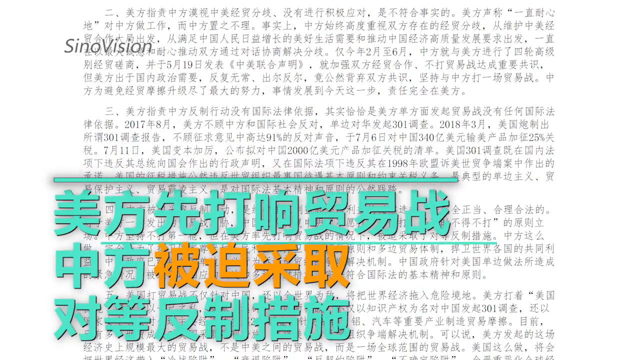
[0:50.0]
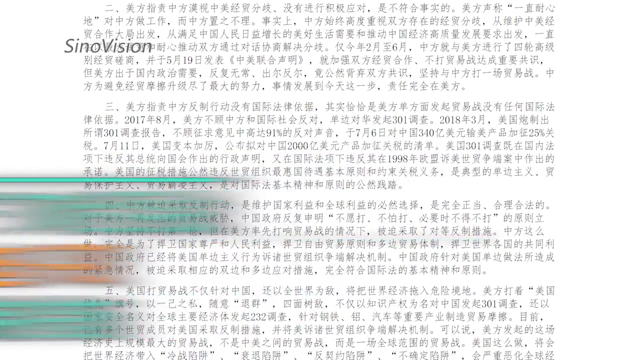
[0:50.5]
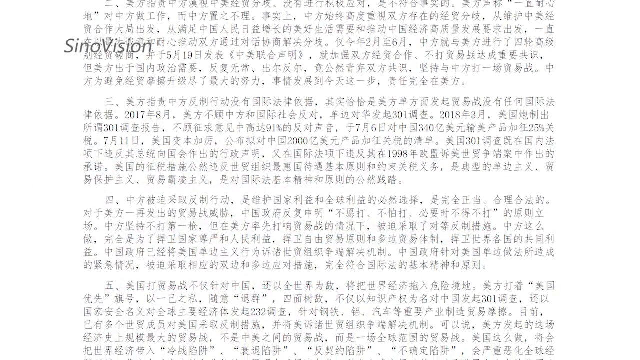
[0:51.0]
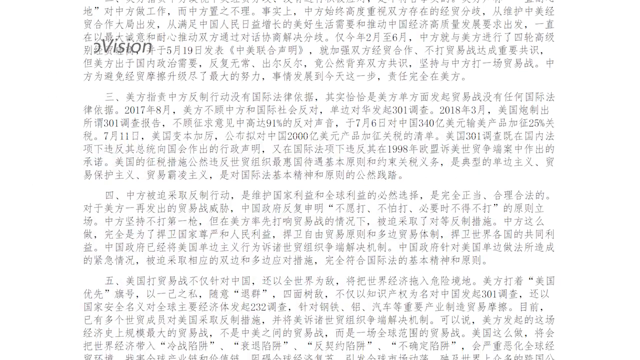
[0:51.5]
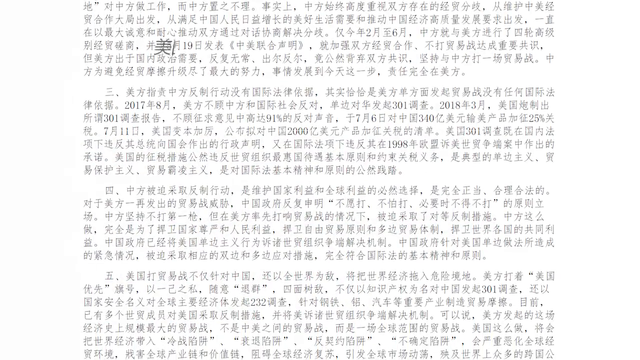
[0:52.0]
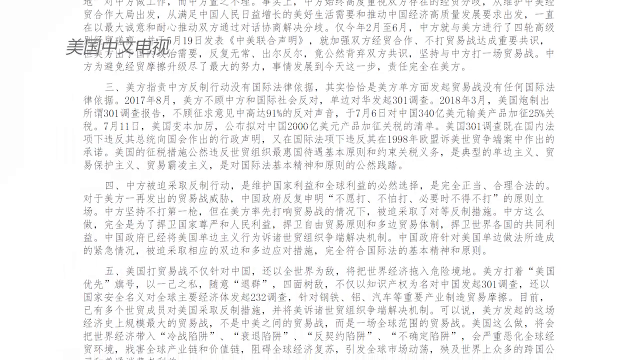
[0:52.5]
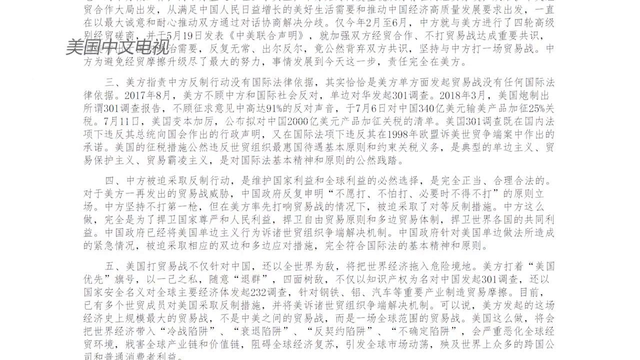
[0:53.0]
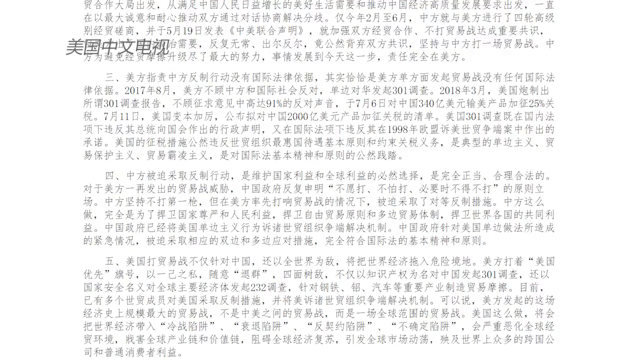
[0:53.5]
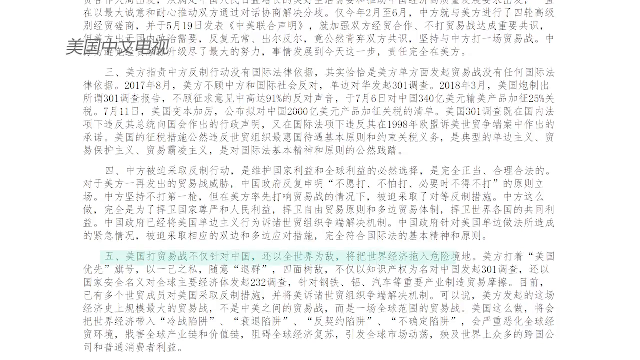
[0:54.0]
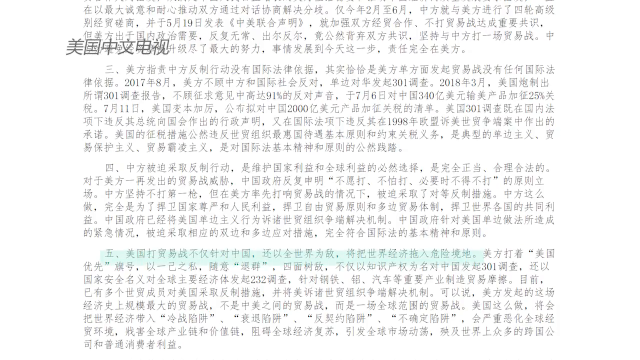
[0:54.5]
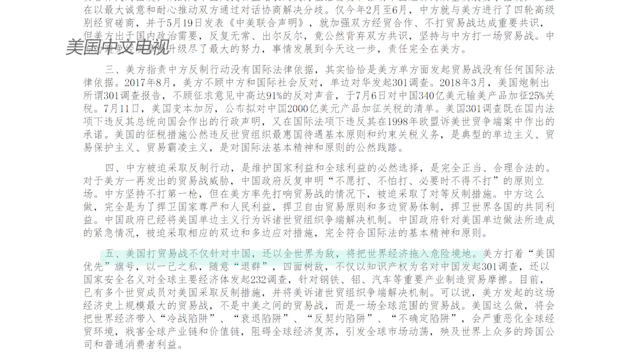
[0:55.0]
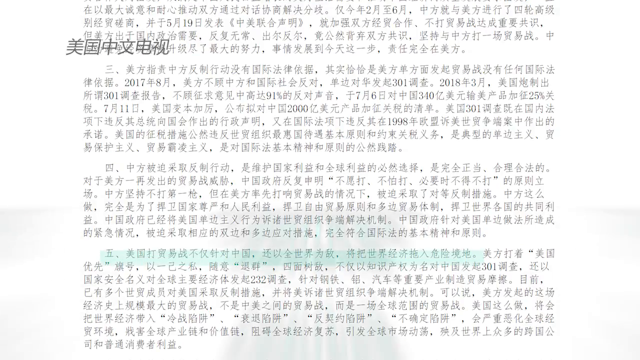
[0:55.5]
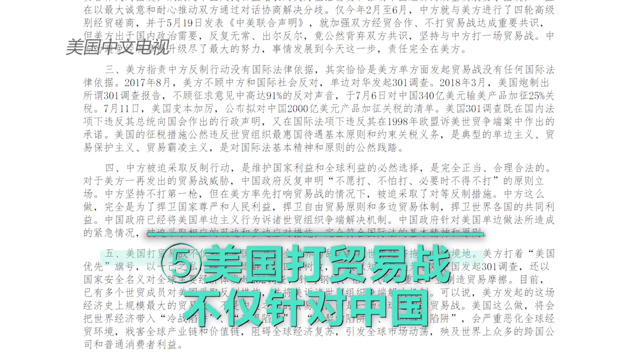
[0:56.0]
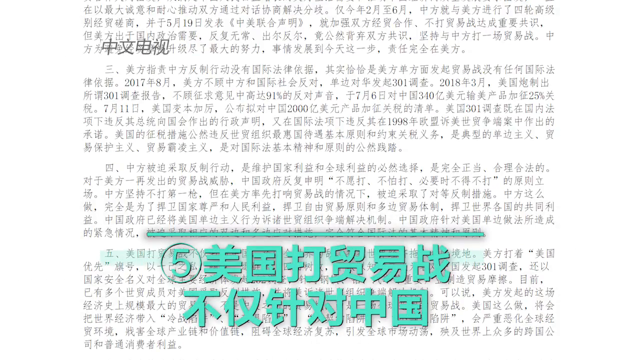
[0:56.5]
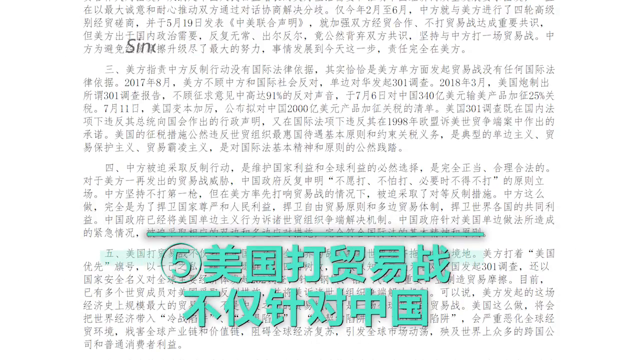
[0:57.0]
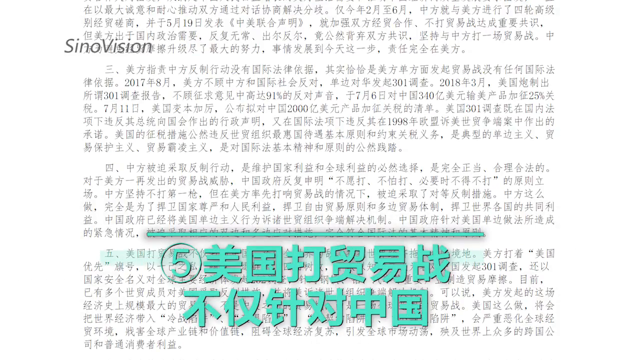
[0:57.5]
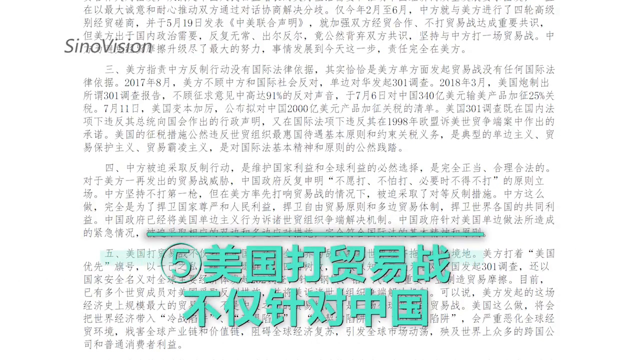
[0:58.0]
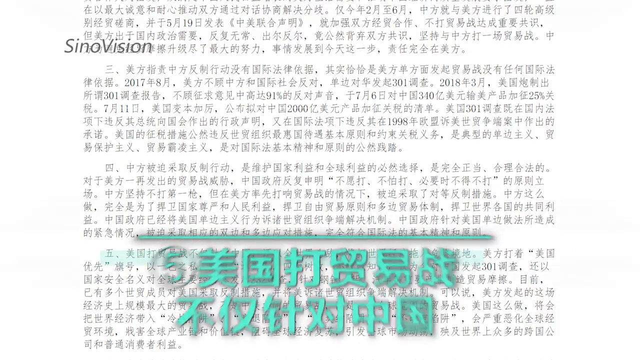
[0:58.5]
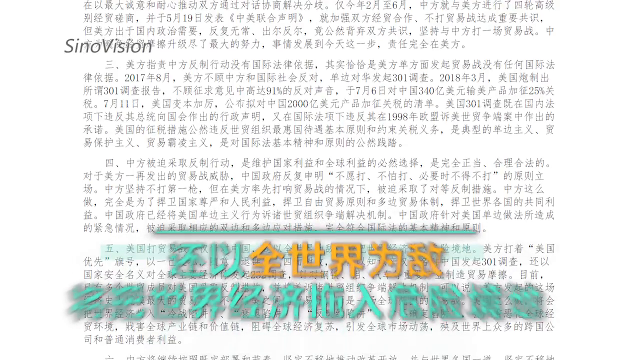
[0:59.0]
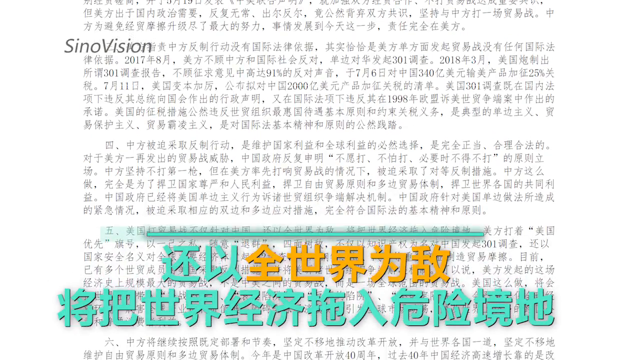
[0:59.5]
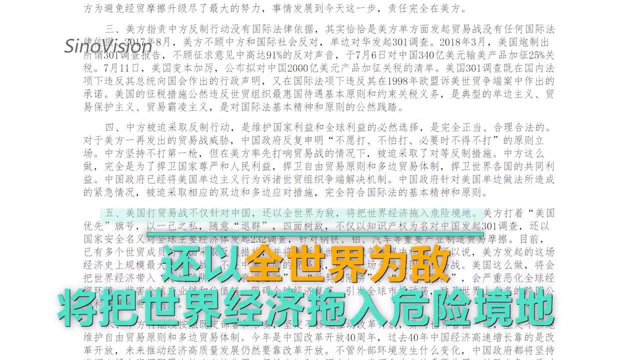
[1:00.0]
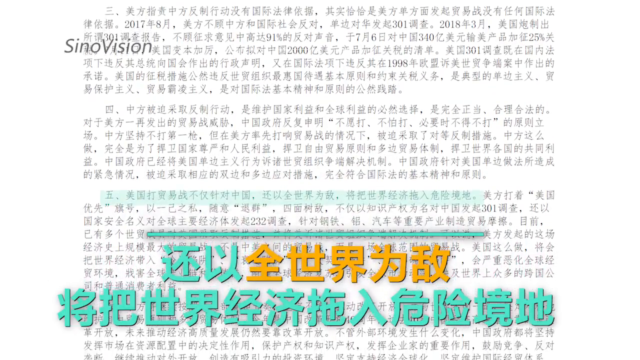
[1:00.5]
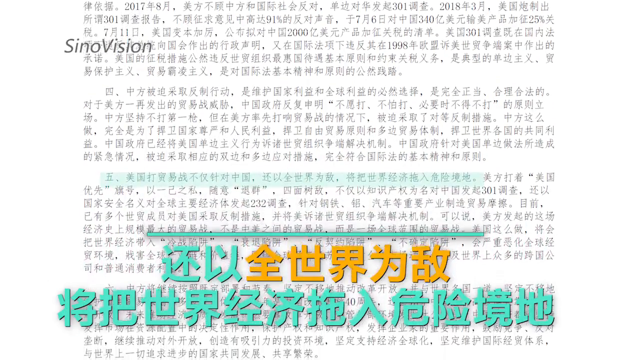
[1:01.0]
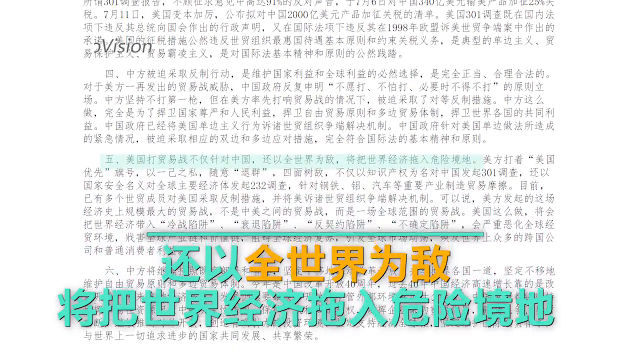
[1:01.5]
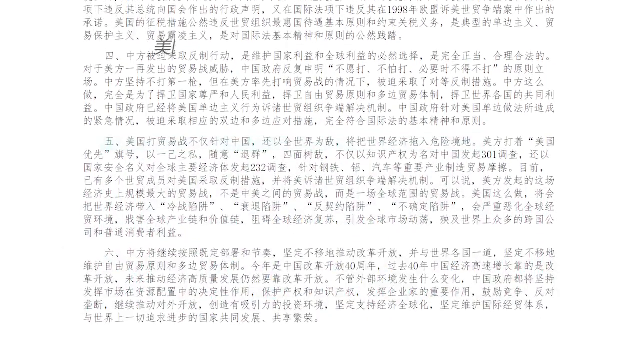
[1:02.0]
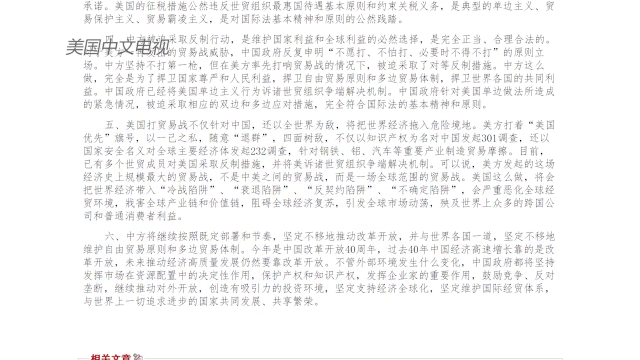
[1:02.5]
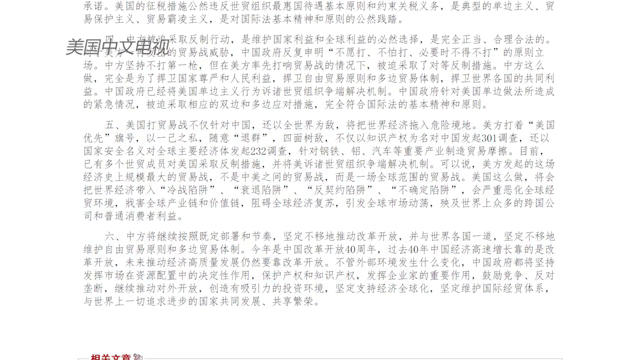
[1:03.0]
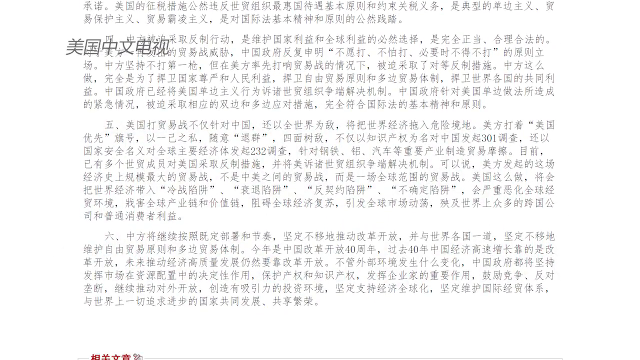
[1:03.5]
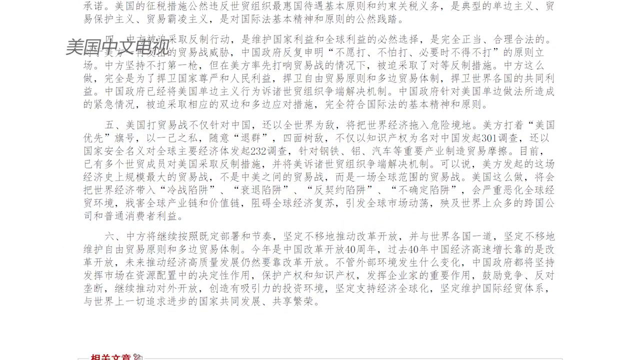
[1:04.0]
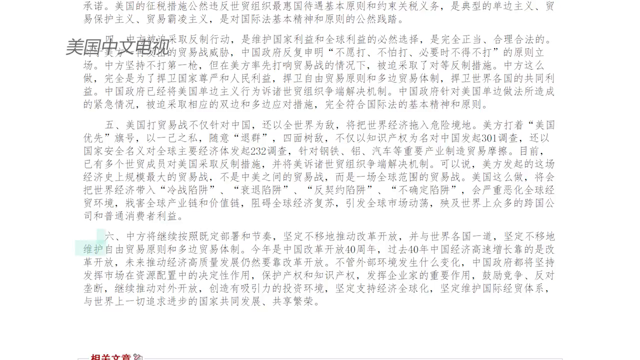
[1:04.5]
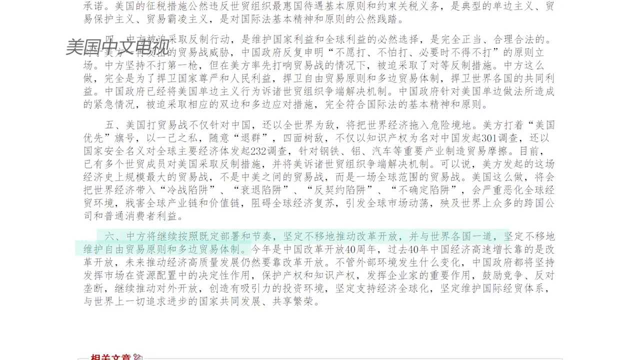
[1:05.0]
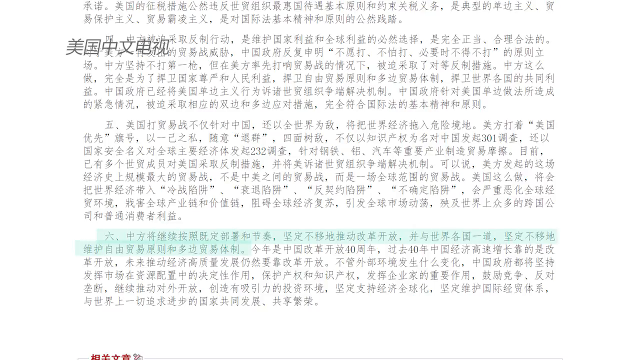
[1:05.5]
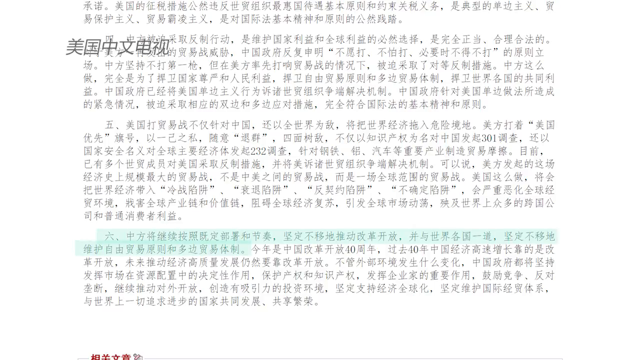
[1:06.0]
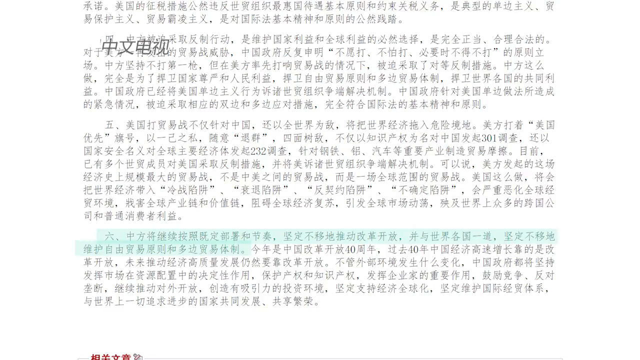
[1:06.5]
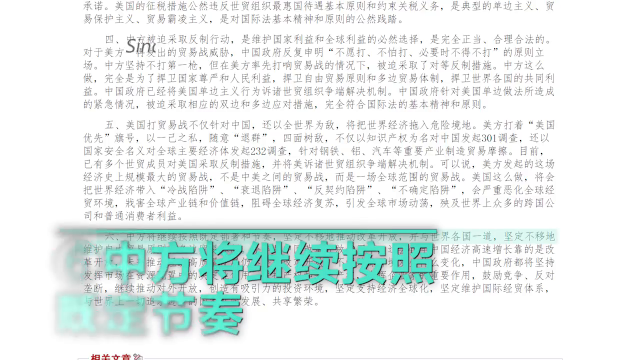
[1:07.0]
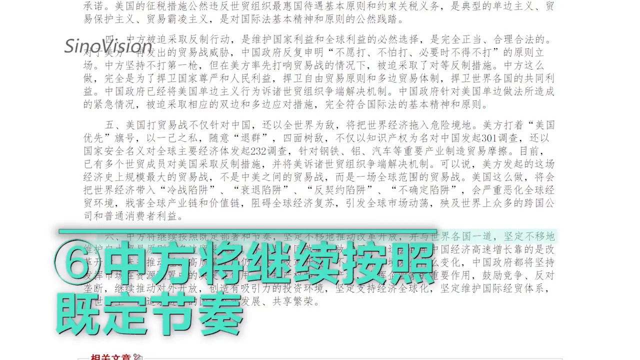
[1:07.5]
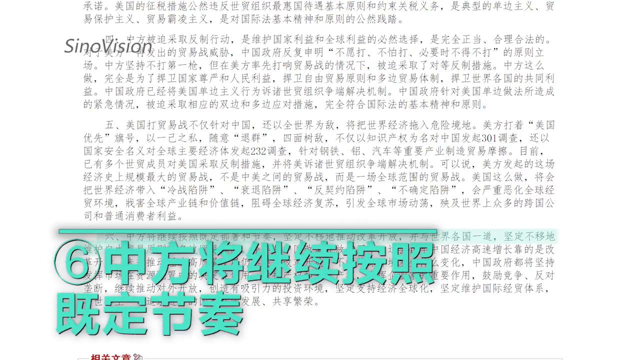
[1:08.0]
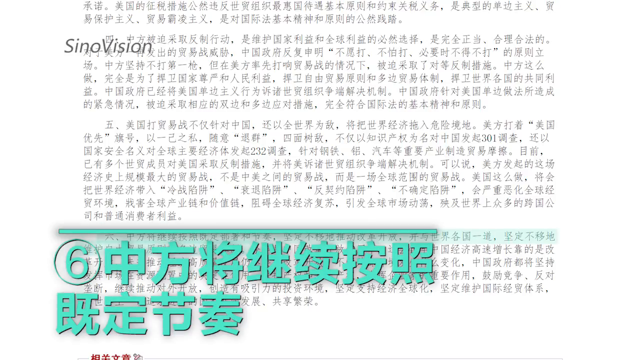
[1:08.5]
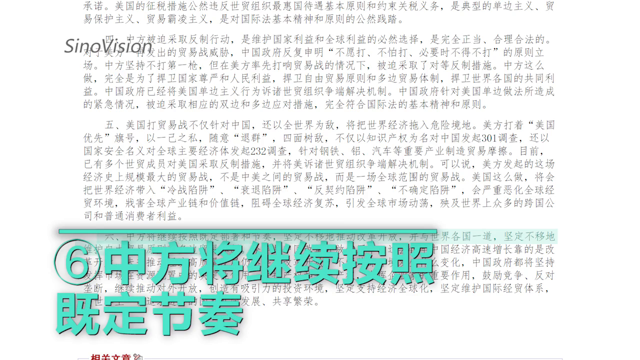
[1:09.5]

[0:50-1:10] Paragraphs and many sentences written in Chinese appear in black. Periodically the view zooms in and enlarges a portion in a teal color, almost highlighting it. The number five appears first and then the number six, going in order. At the top the text reads "CINOVISION." The paragraphs continuously move upward toward the top of the screen while the bottom area fills in with more text.